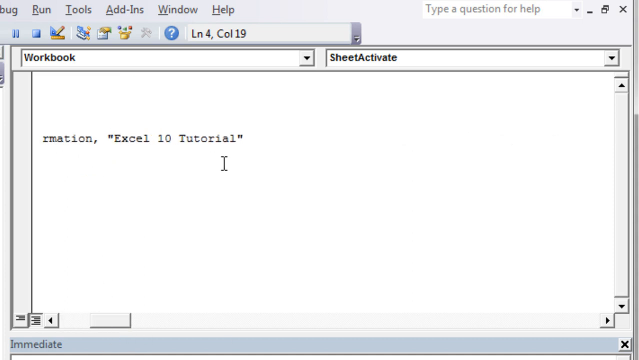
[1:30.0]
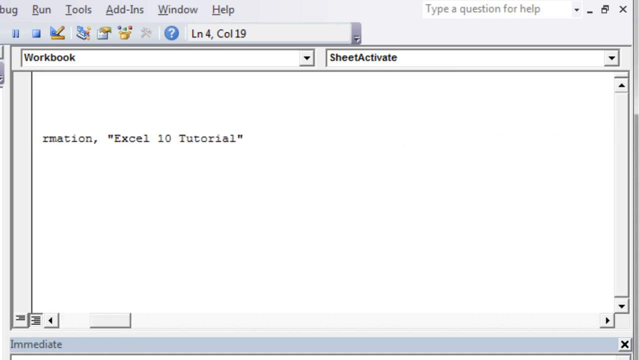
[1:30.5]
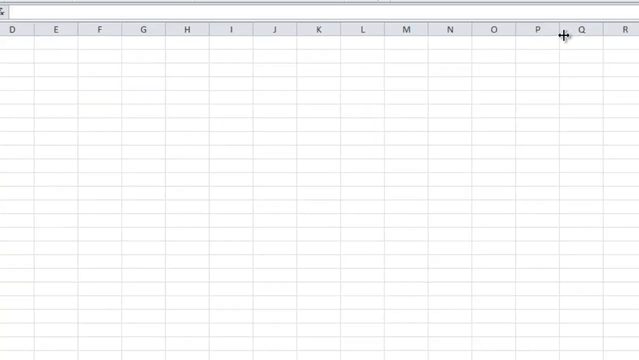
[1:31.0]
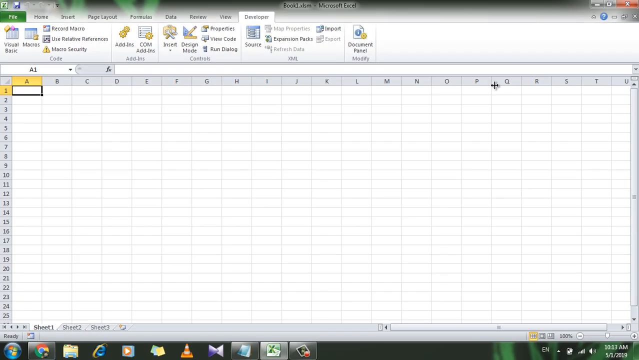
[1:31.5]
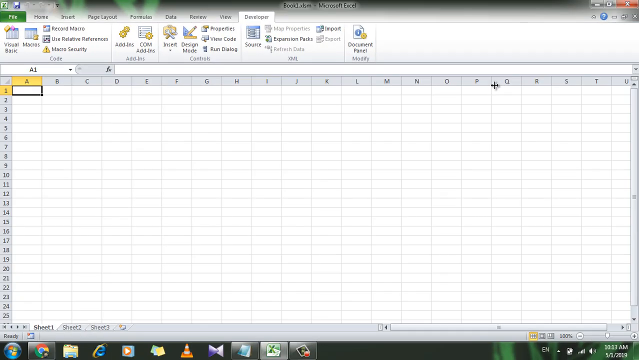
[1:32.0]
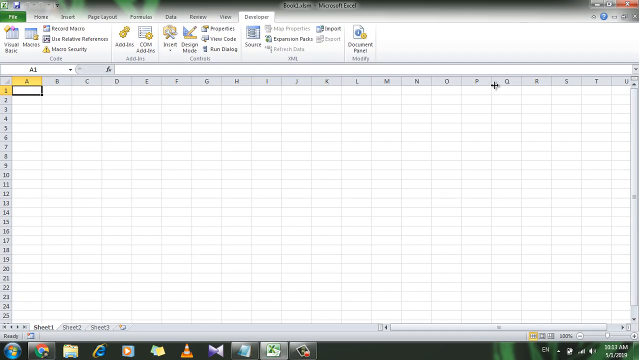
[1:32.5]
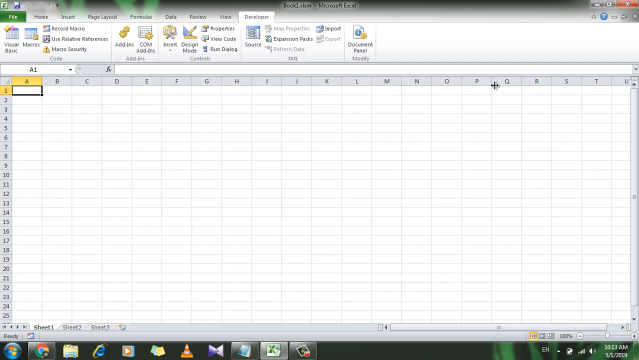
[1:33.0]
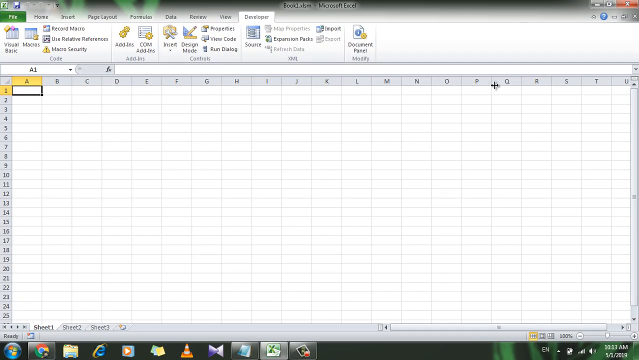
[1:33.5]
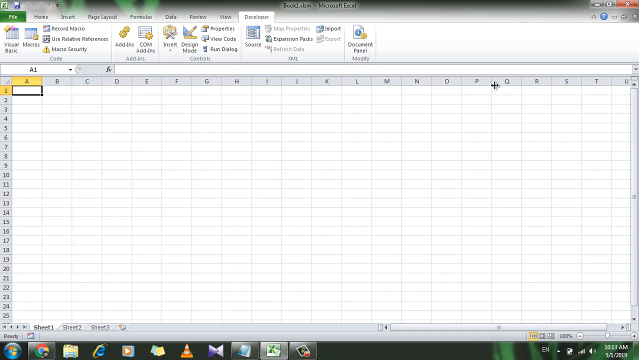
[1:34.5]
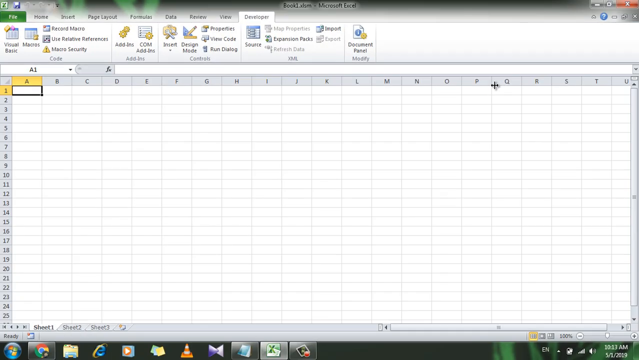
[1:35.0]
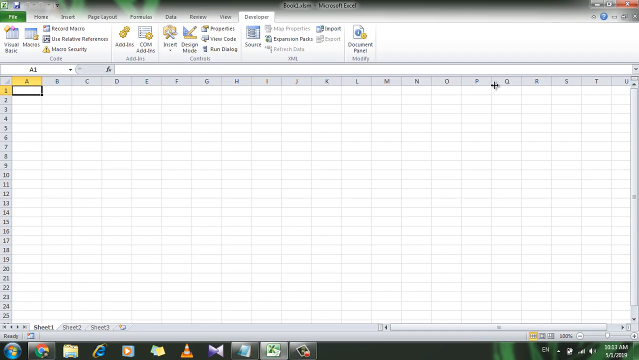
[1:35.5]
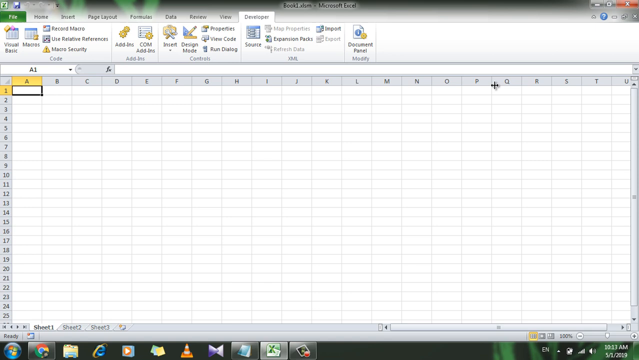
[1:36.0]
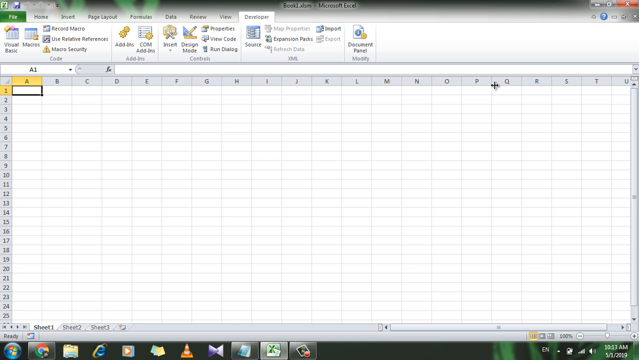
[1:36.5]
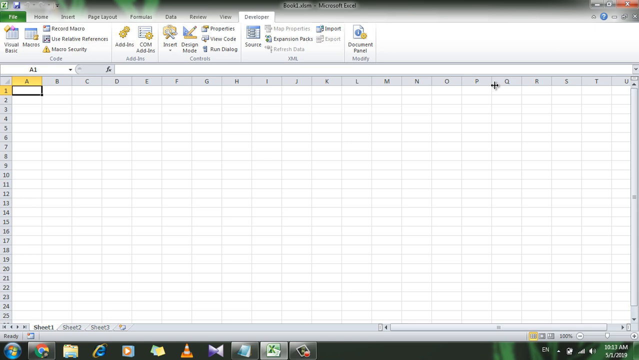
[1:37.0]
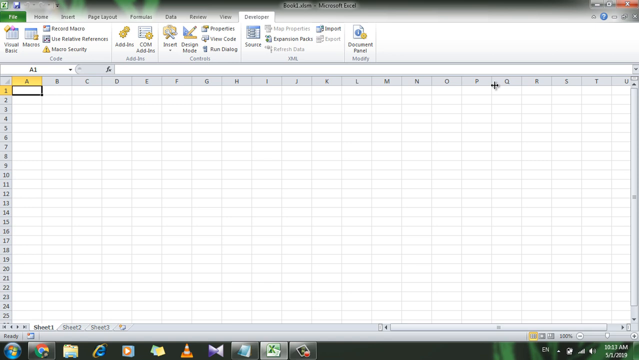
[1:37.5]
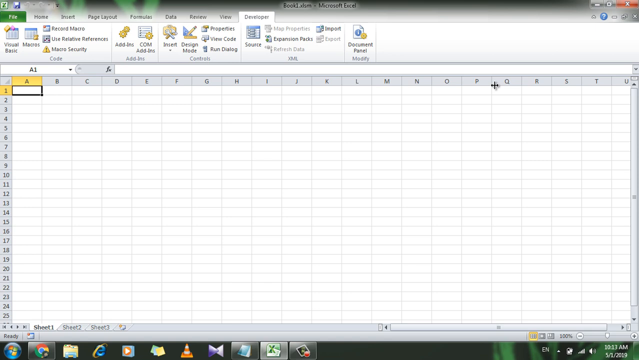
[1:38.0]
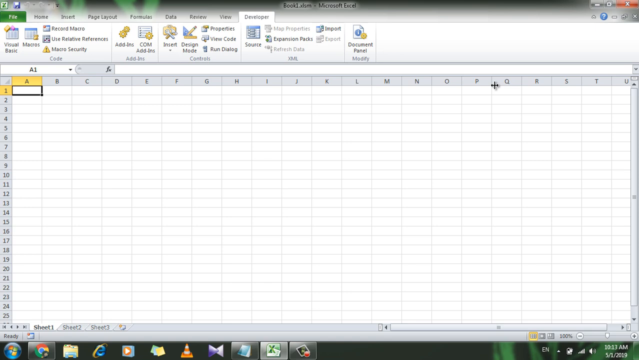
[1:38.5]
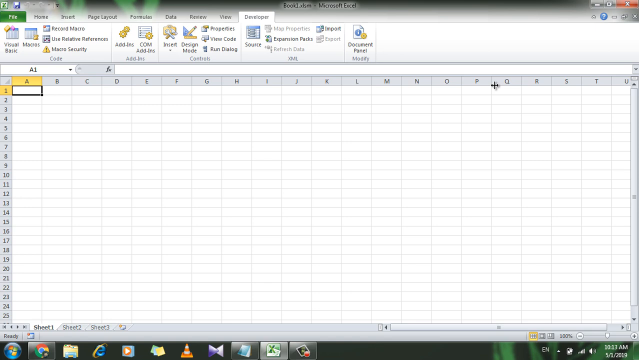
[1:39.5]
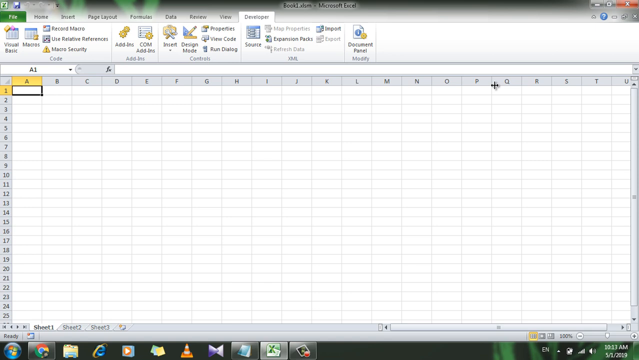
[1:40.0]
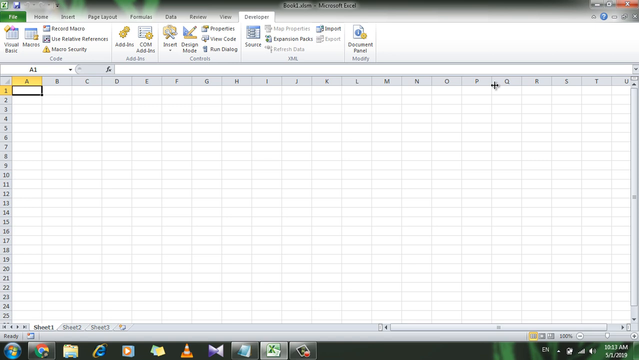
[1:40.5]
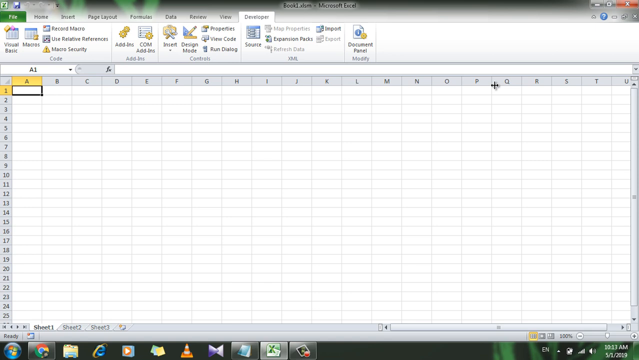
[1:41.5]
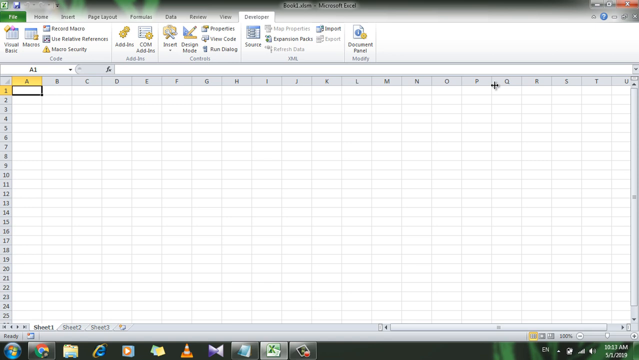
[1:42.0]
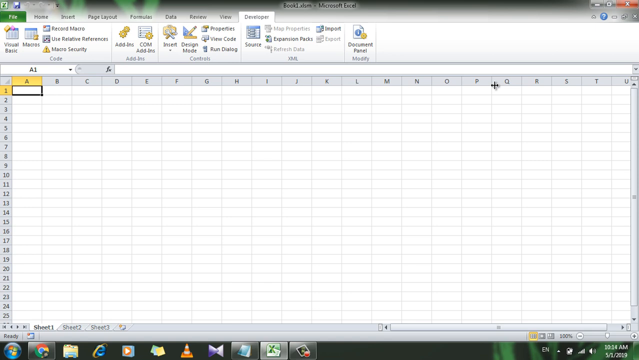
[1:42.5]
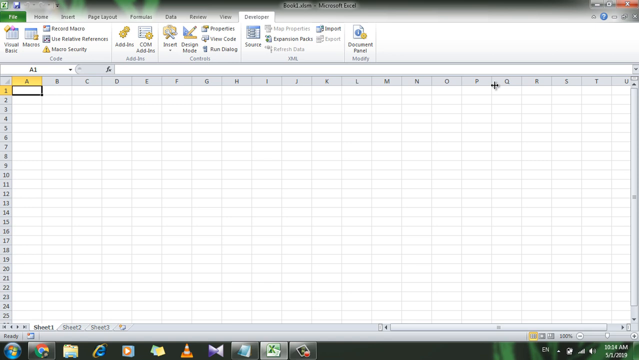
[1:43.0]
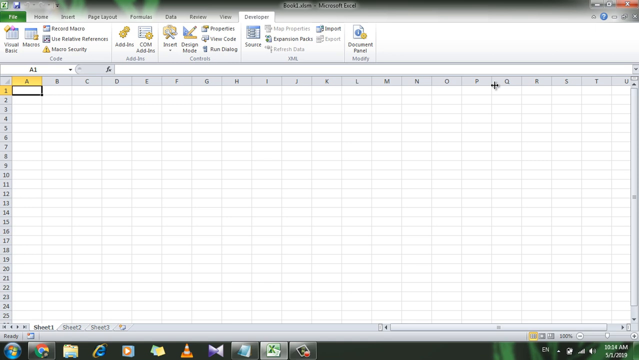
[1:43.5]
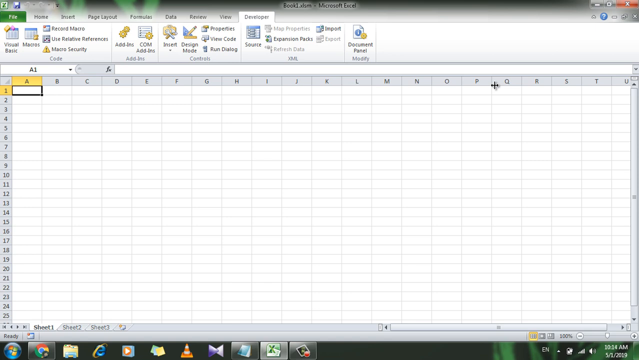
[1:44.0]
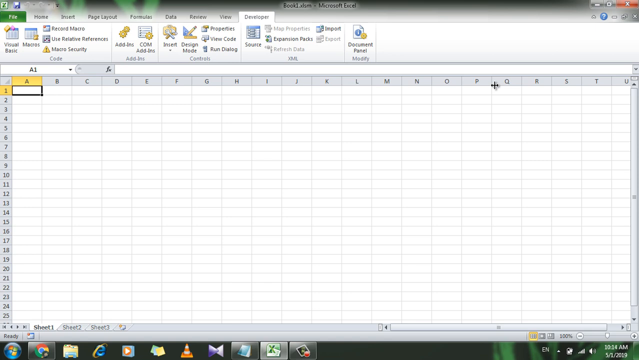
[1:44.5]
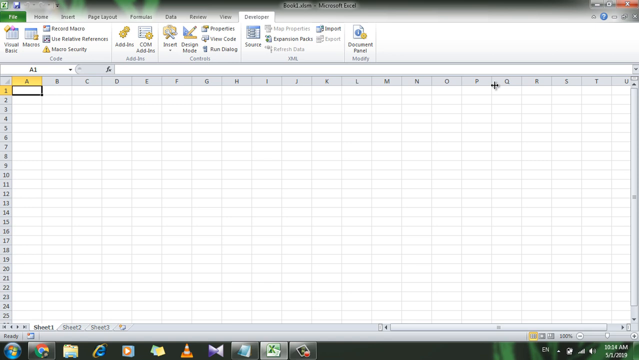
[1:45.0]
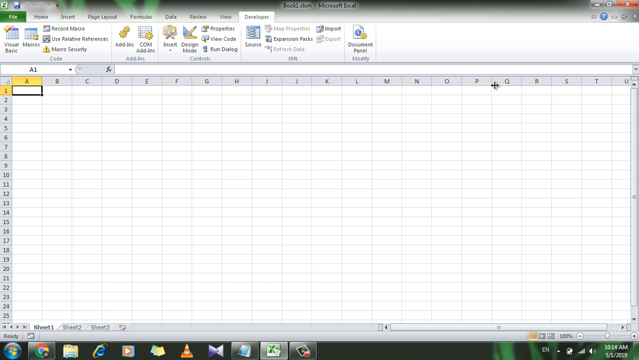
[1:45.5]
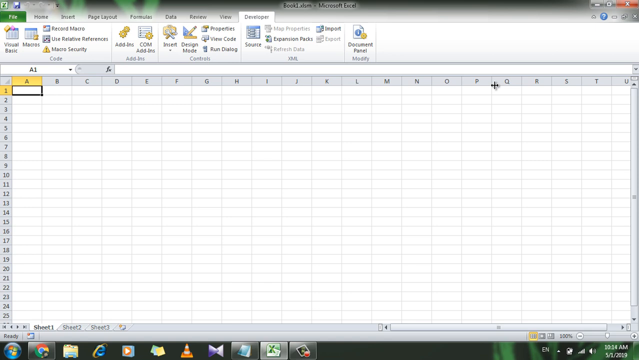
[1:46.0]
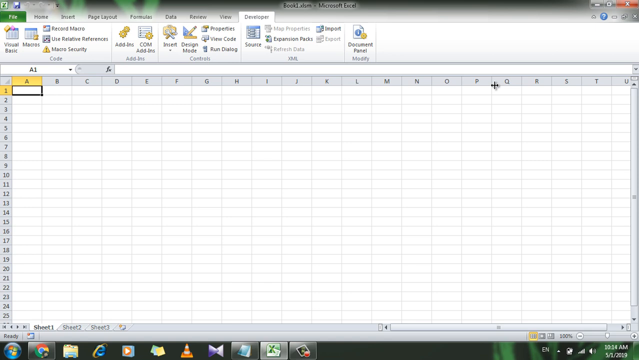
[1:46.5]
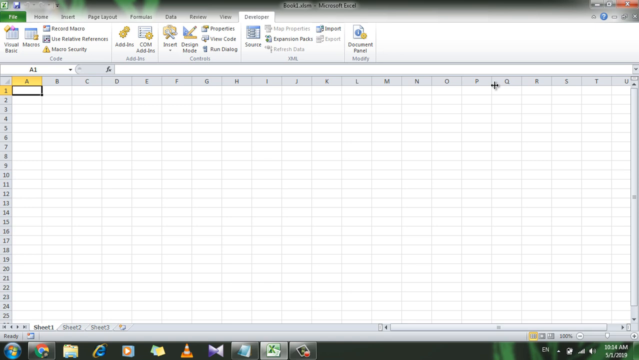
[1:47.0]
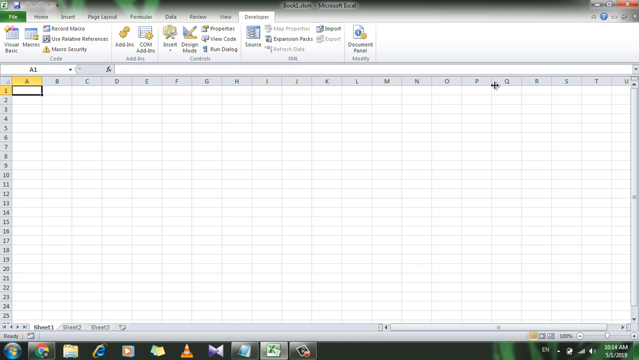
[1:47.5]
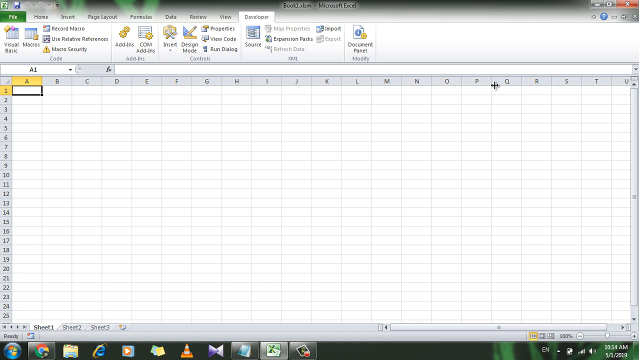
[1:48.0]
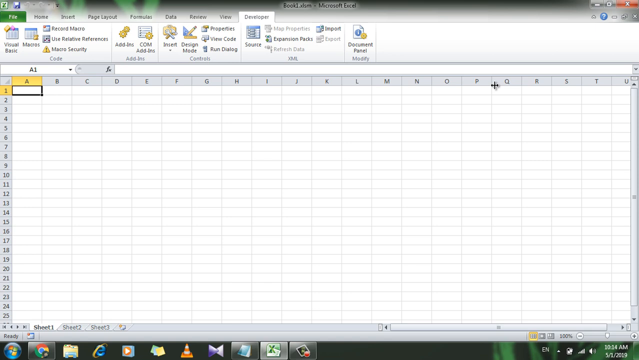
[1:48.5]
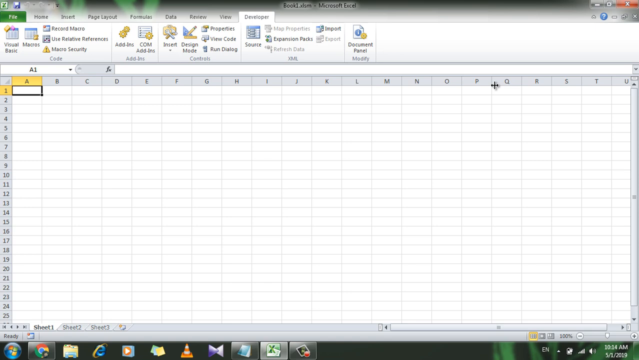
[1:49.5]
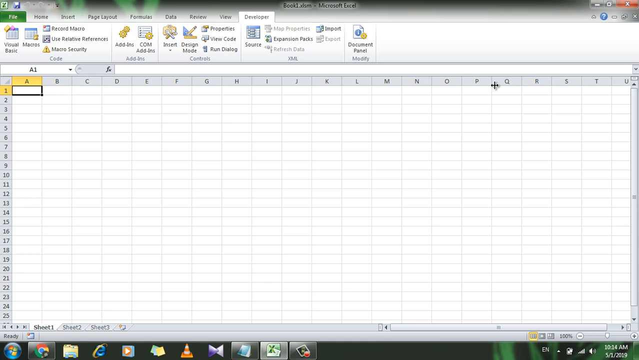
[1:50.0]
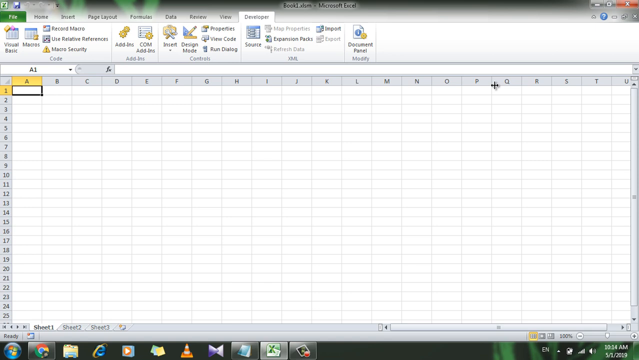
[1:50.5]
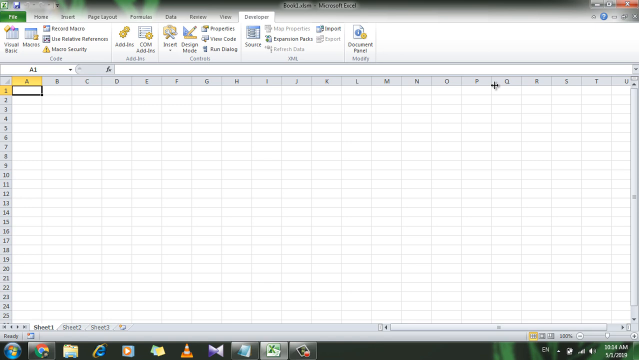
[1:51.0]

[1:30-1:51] The screen zooms out and shows the entire Excel program as the user closes the window containing the code. The screen then stays still with no actions; the mouse cursor remains in the same position and does not move. The entire screen is visible on the Sheet 1 side of the Excel program, with the whole program open and no information entered. The columns within Sheet 2 are shown numbering from 1 to 25 and lettered A to U, with the first box, A1, selected.